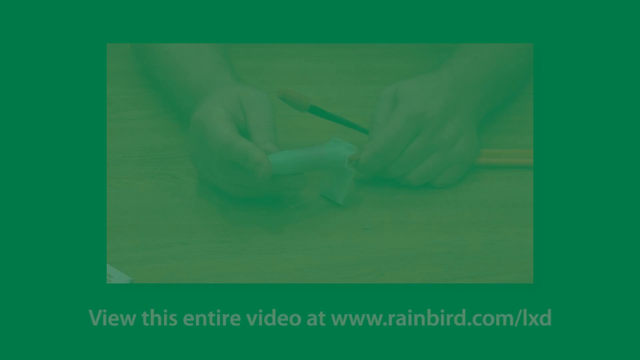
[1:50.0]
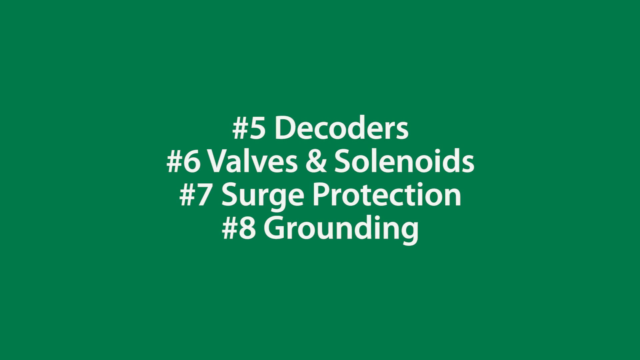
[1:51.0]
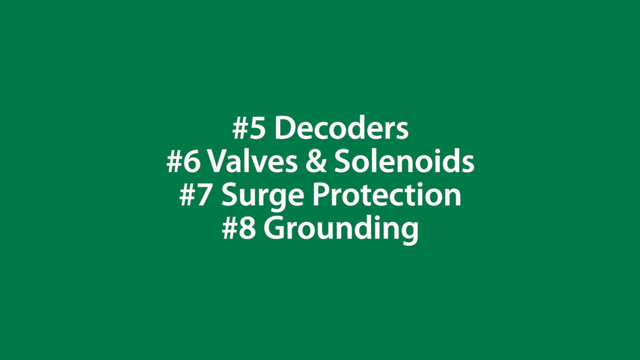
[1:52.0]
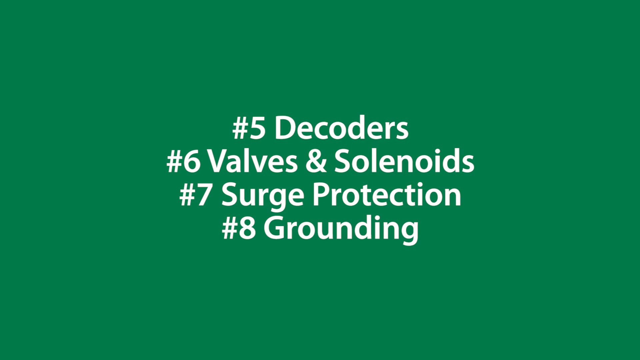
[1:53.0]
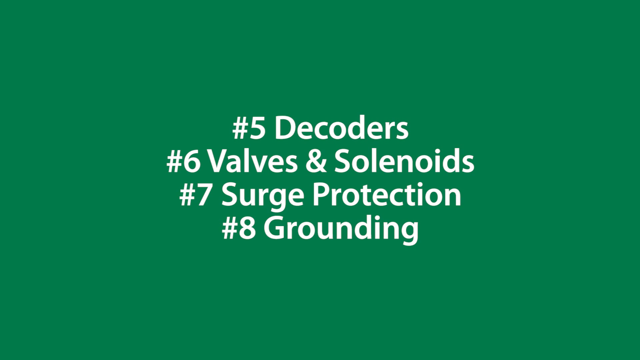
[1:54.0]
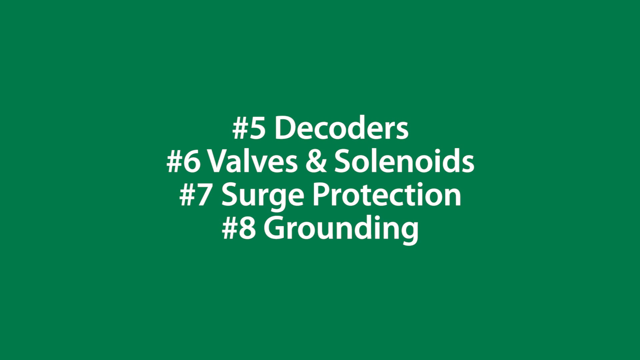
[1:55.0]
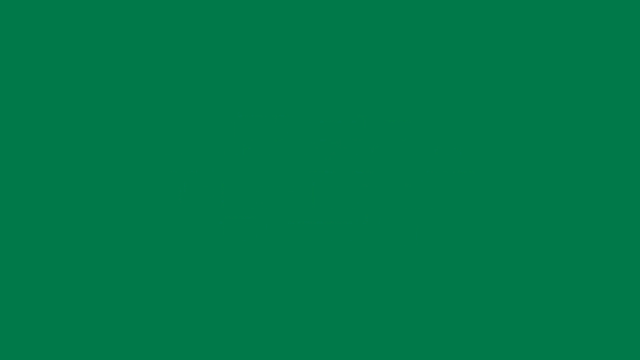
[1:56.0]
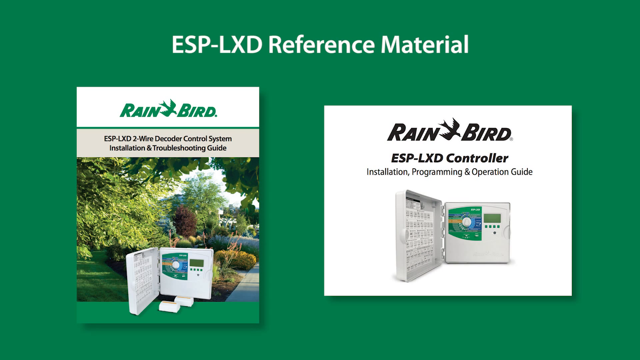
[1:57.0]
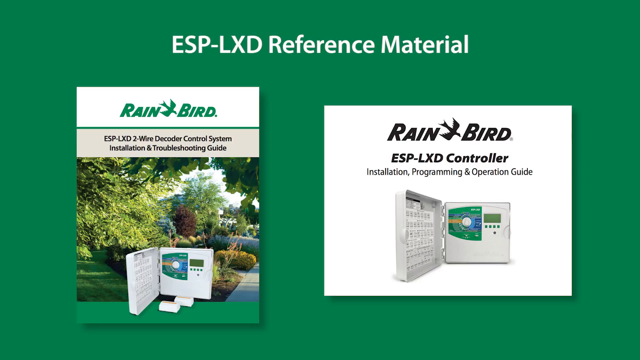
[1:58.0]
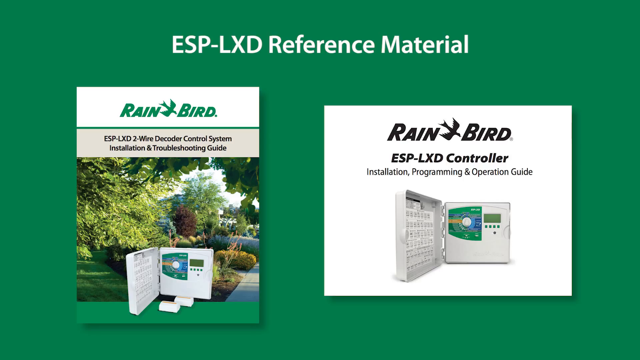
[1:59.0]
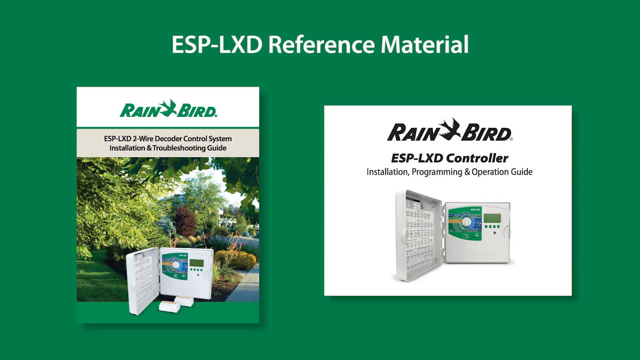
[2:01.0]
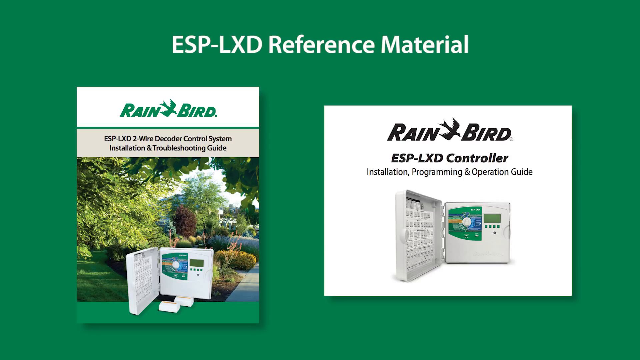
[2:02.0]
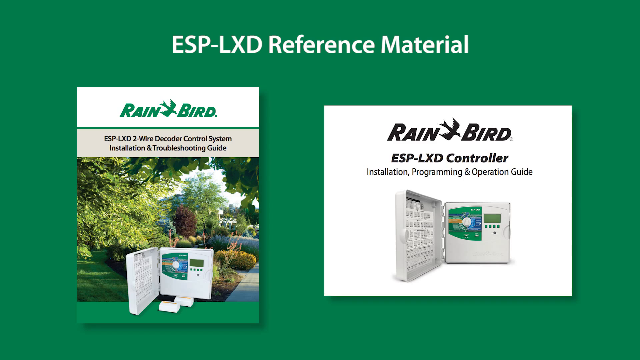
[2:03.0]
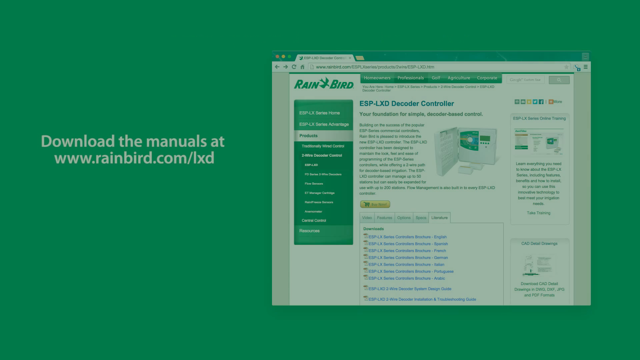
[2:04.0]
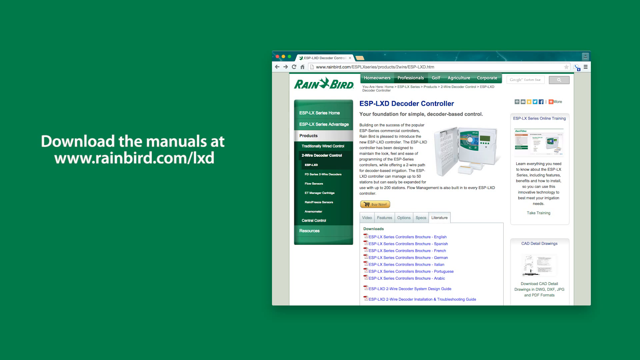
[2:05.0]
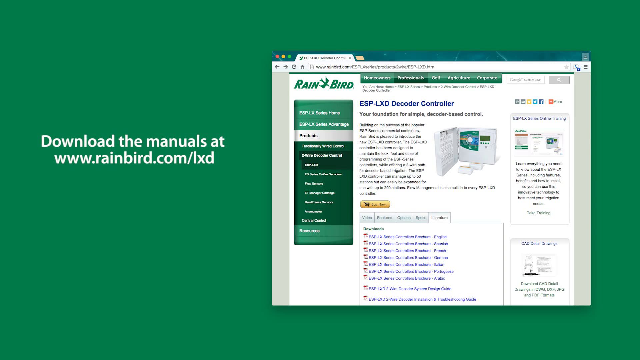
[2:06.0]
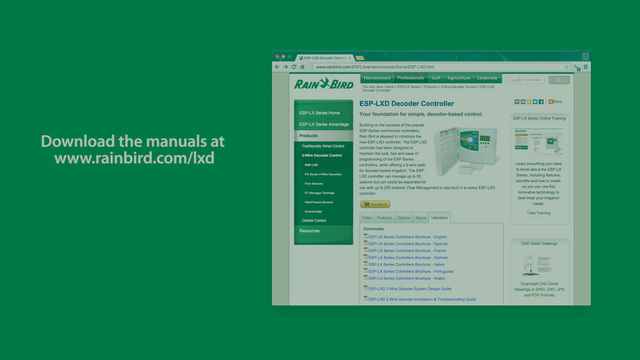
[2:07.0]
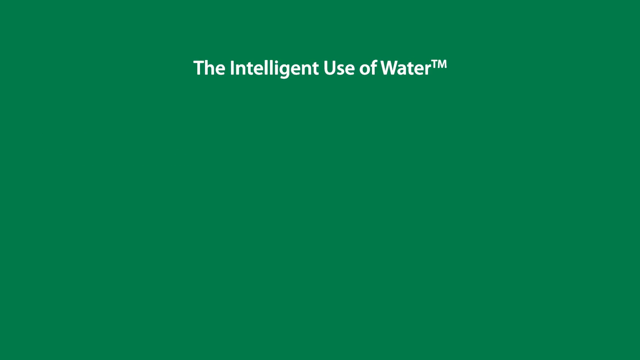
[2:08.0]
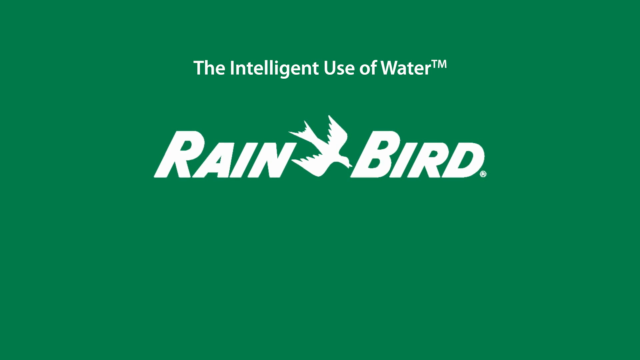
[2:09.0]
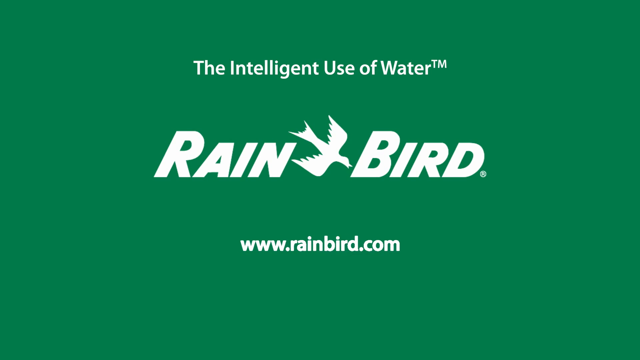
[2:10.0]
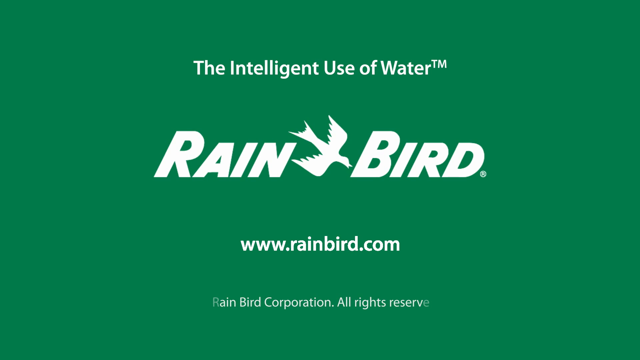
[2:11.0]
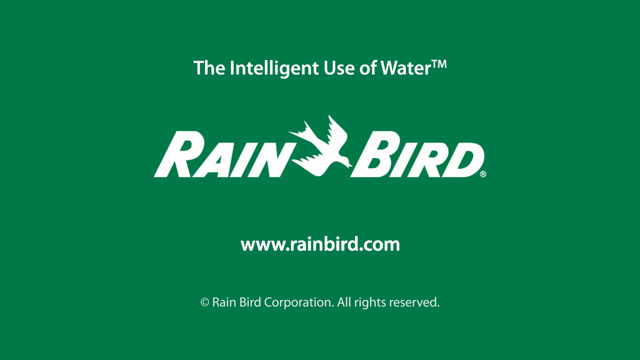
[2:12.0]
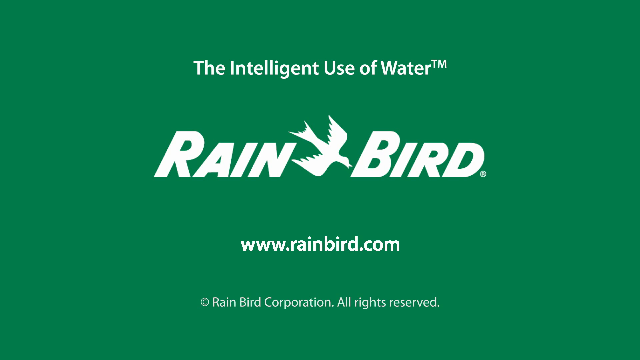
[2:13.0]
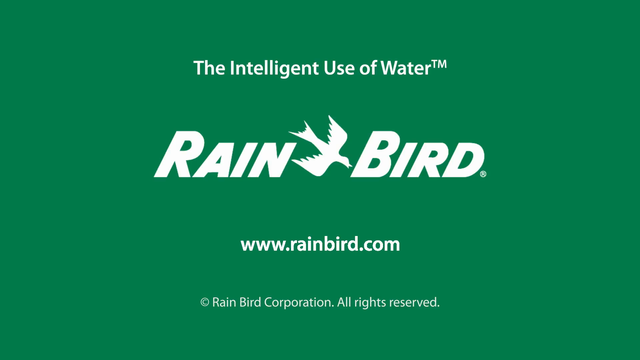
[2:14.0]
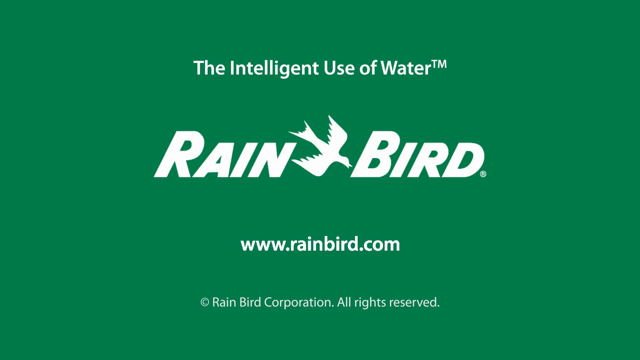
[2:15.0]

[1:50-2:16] A green background shows "number five, decoders," "number six, valves and solenoids," "number seven, surge protection," and "number eight, grounding." A screen on a black, red and green background then reads "ESP-LXD reference material" with two images. The first says "rainbird" and "ESP-LXD two-wire decoder system installation and troubleshooting guide," with a photo of landscaping with trees, grass, shrubbery, wildflowers and a paved path, and an open control panel superimposed on it with two little devices next to it. The second image, on a white background with black text, says "rainbird" with the bird-in-flight logo and "ESP-LXD controller installation programming and operation guide," and shows an open control panel. A screen with white text on a green background then reads "download the manuals at www.rainbird.com/lxd," followed by an image of a web page with text, images and links where the manuals can be downloaded. A final green text card reads "the intelligent use of water" with a Rainbird trademark and logo, "www.rainbird.com," and "Rainbird Corporation all rights reserved."